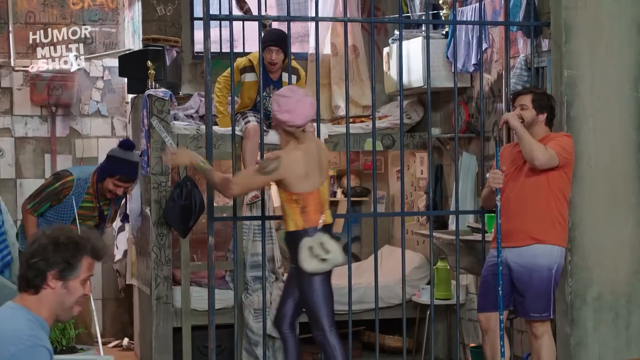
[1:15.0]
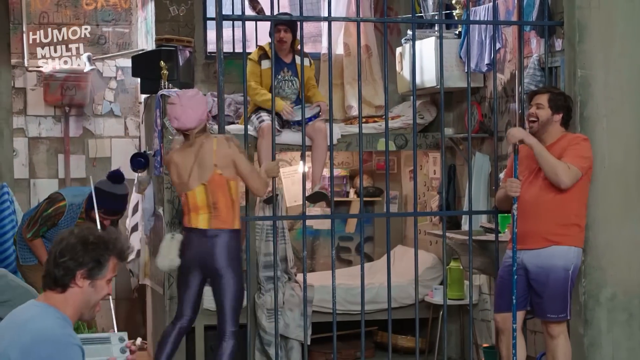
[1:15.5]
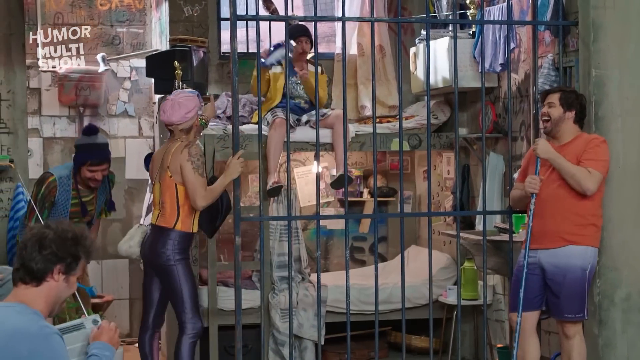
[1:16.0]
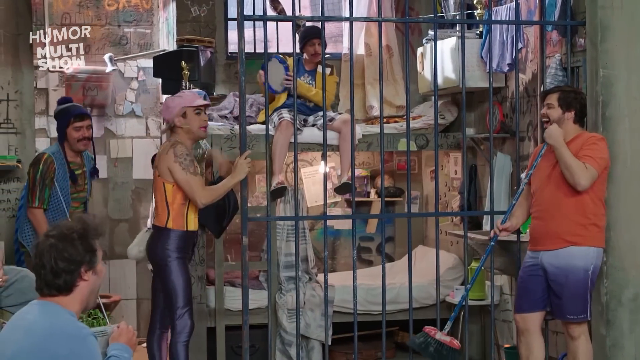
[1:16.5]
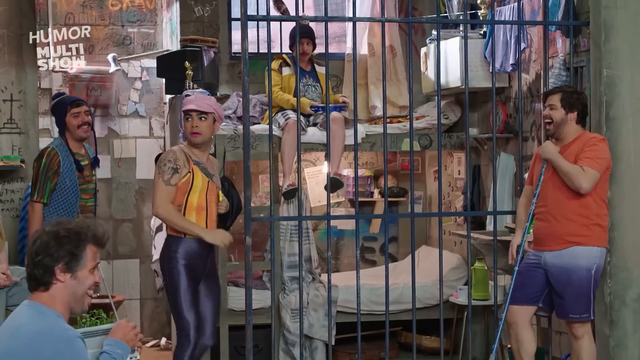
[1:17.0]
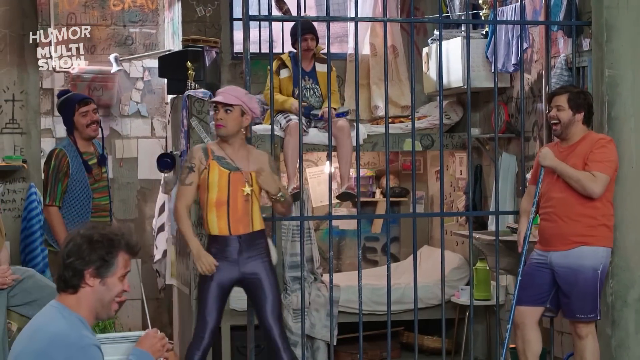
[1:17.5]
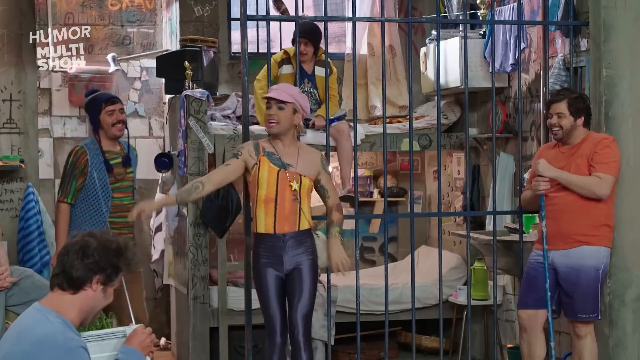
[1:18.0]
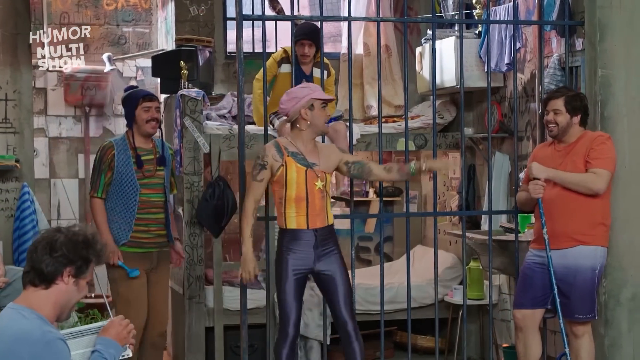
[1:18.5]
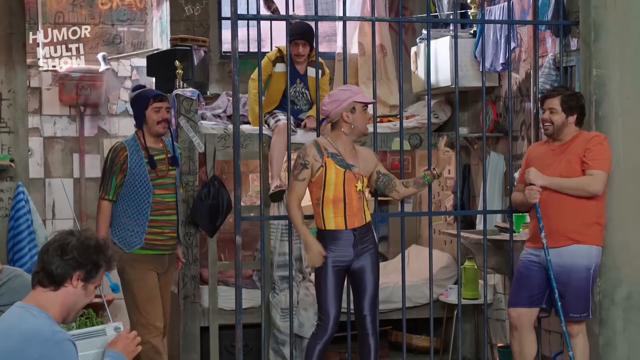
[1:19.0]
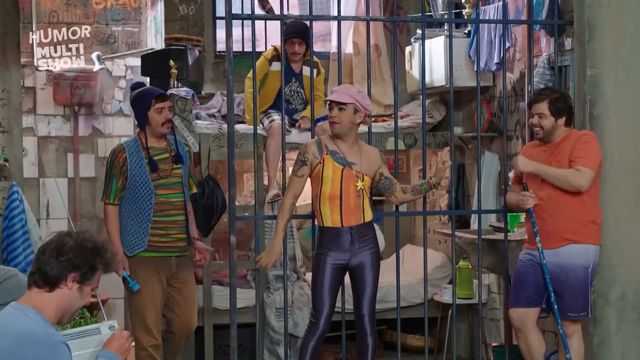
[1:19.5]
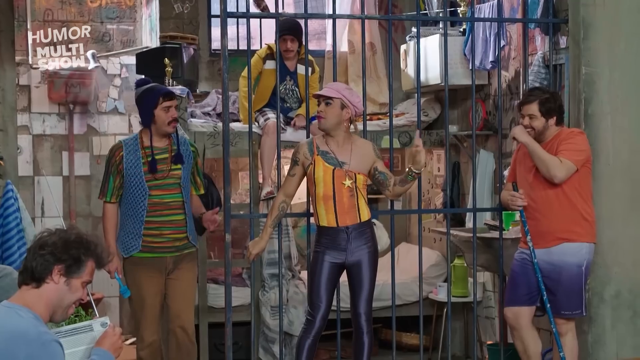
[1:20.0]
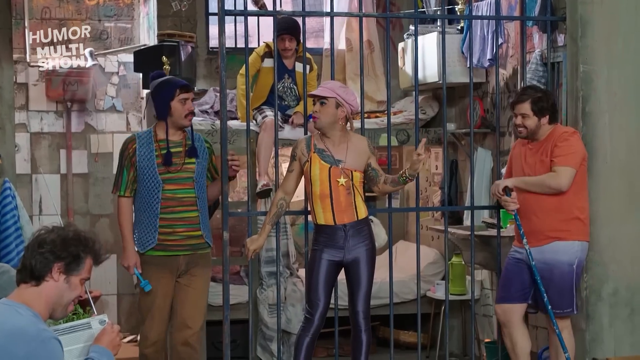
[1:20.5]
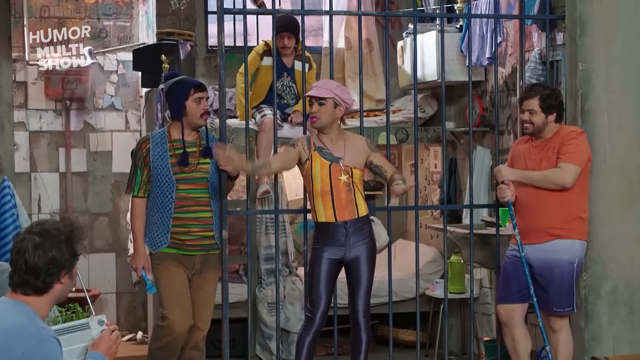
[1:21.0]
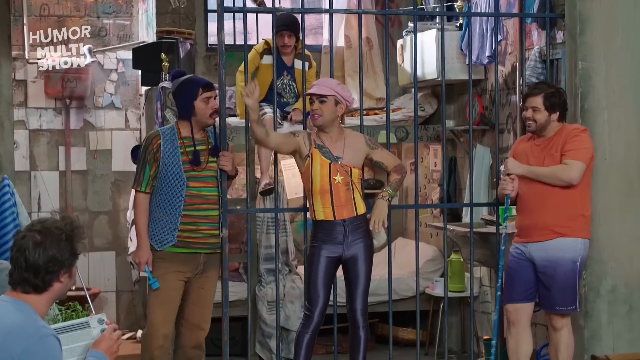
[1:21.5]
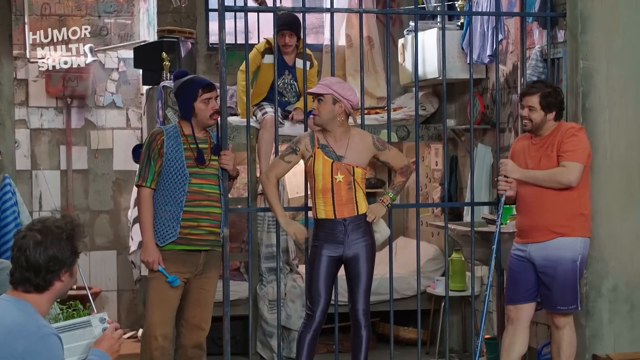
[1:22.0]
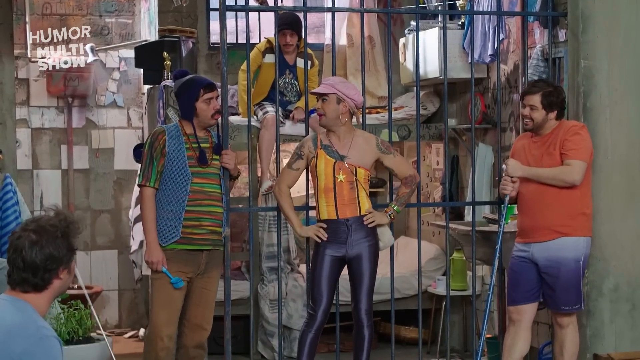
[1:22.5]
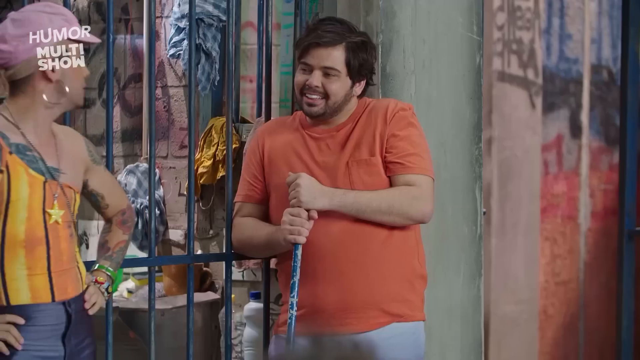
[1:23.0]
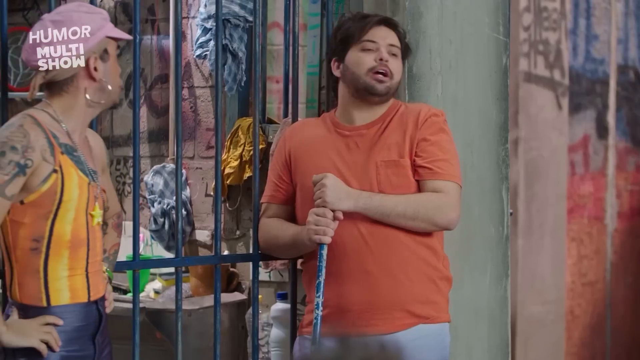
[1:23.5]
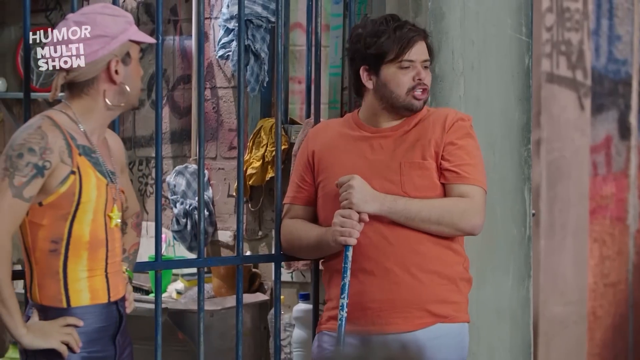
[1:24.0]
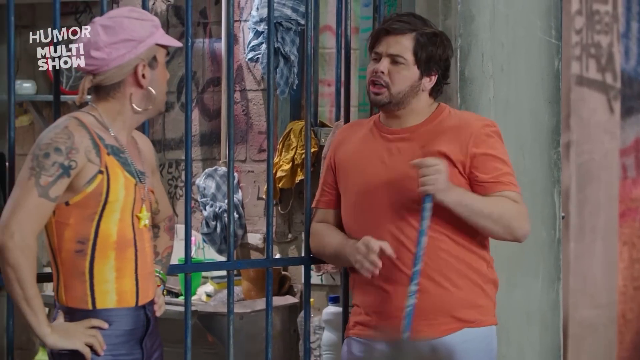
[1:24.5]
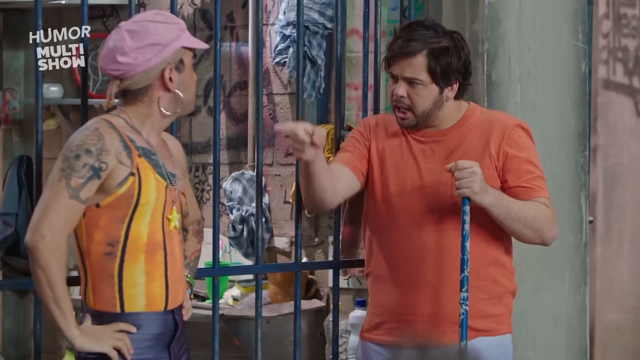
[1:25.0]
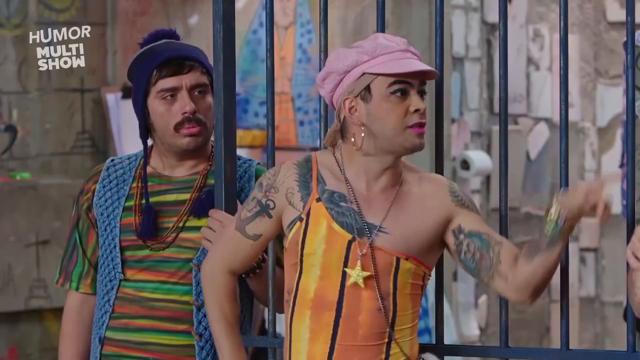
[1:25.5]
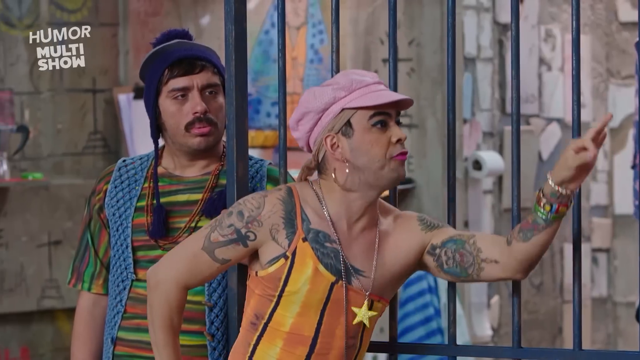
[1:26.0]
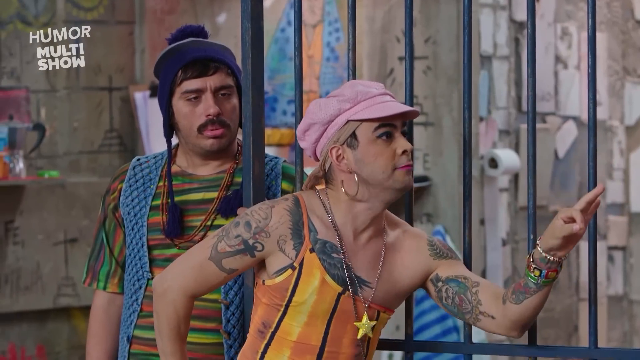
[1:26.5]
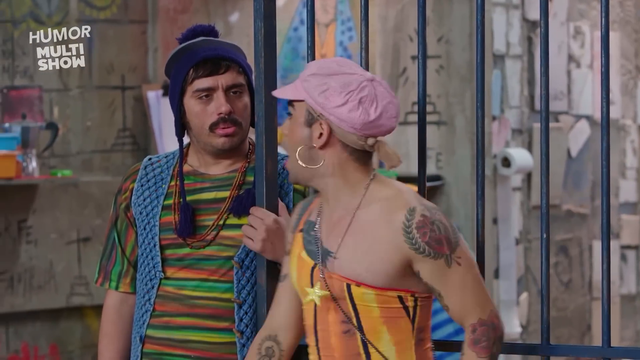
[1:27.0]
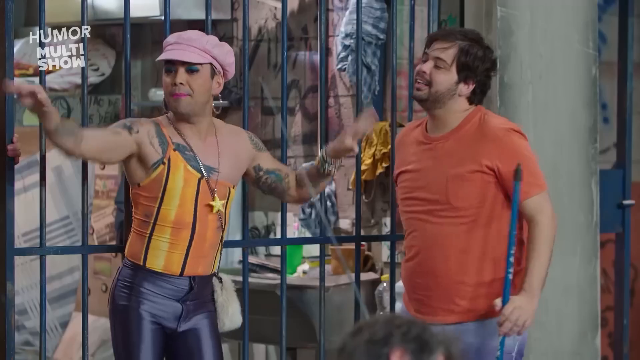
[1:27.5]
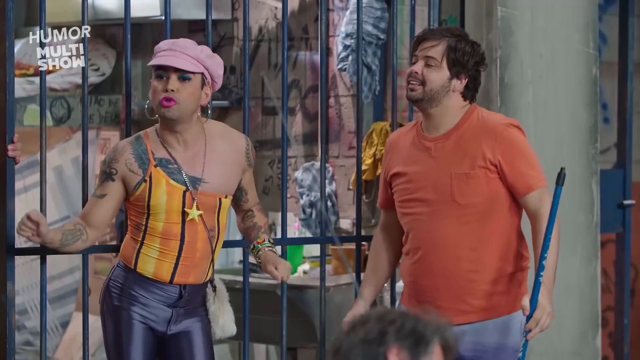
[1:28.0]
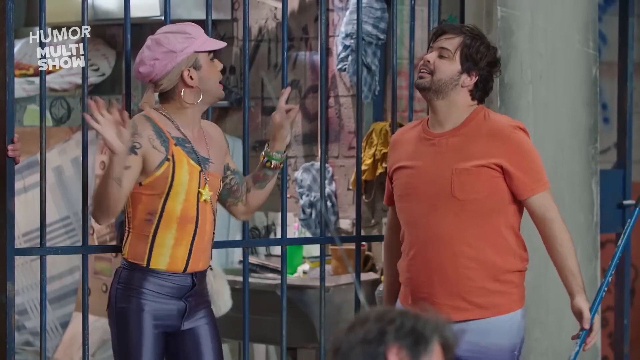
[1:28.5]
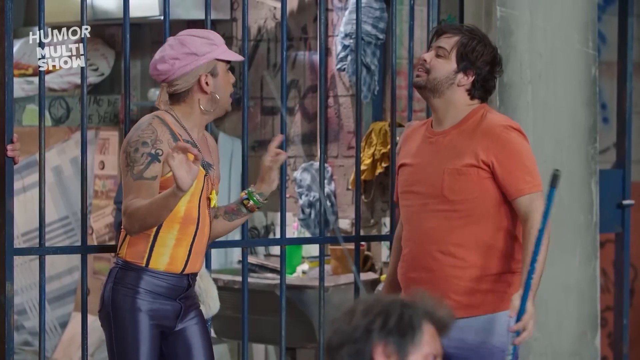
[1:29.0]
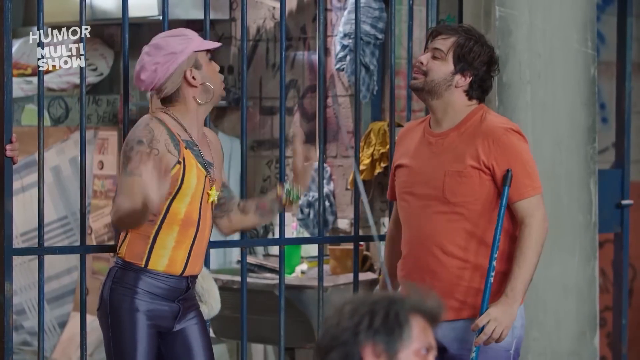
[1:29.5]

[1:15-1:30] In this Humor Multishow skit, the transvestite prostitute in lycra and the pink hat taunts the two men in the jail cell. The man in the orange shirt seems to get into a lot of arguments with her, and they point at each other. The man in the bunk bed behind her makes some snide remarks, then puts something in front of his face when she comes at him. The man with the pom-pom on his hat makes remarks, starts a little trouble and is always laughing. Most of the exchange is between the transvestite prostitute and the man in the orange shirt, while everyone else is just kind of there for the show. The man in the long-sleeved blue shirt in the lower right corner doesn't get involved much. When the man in the orange shirt mouths off, no one comes to his aid. She points at each of the men, and they apparently don't listen to her as she snaps back at all of them.